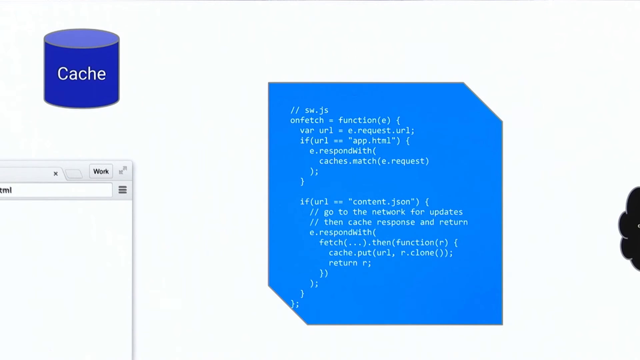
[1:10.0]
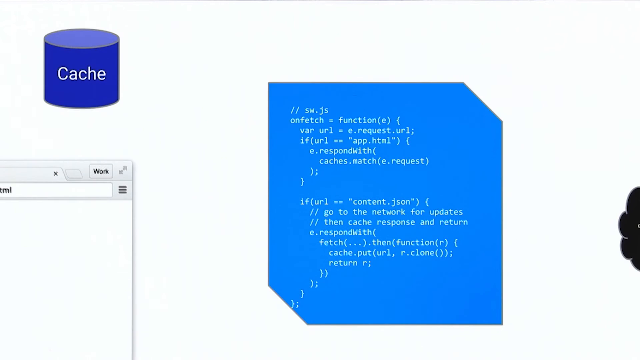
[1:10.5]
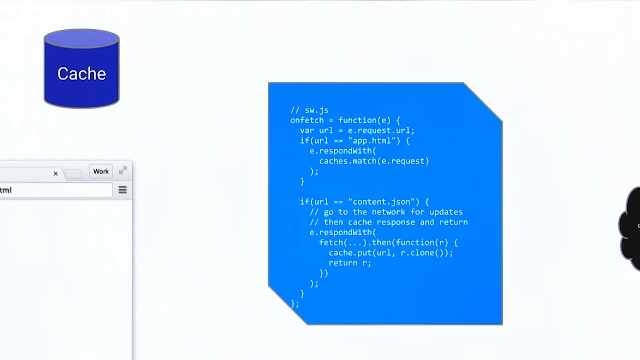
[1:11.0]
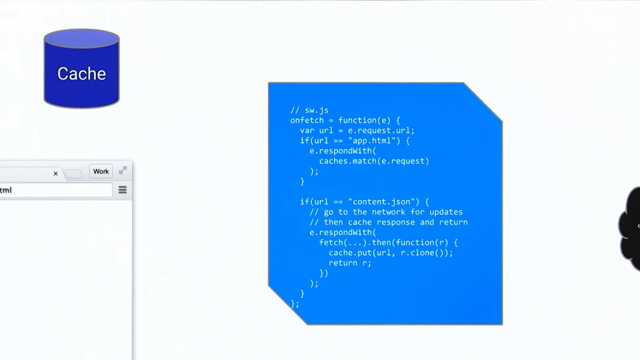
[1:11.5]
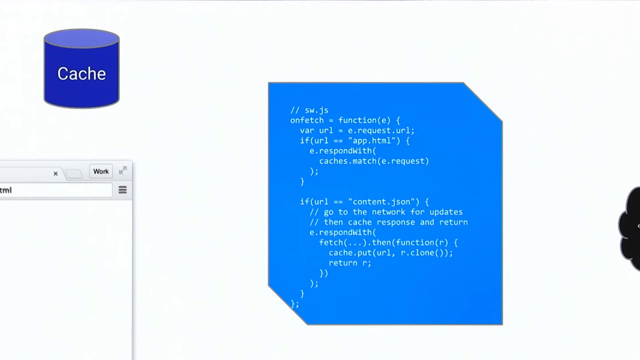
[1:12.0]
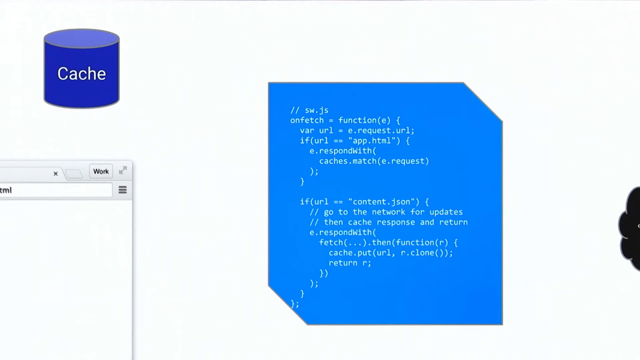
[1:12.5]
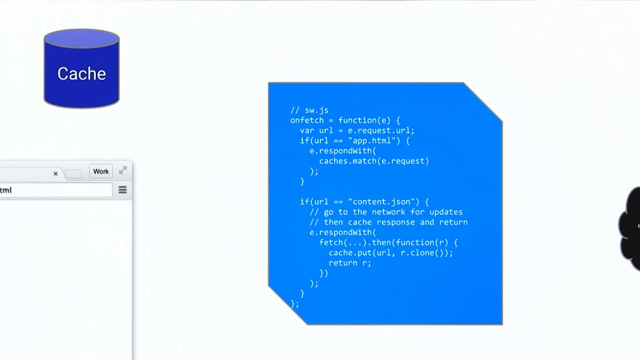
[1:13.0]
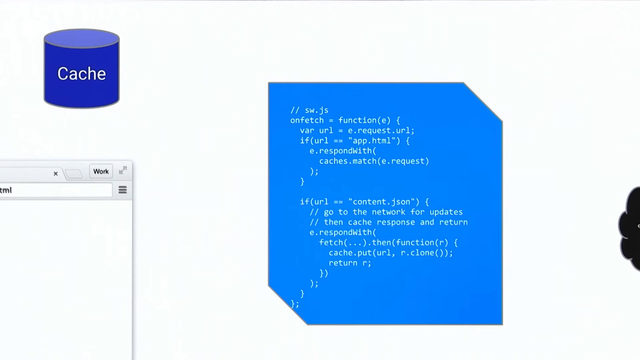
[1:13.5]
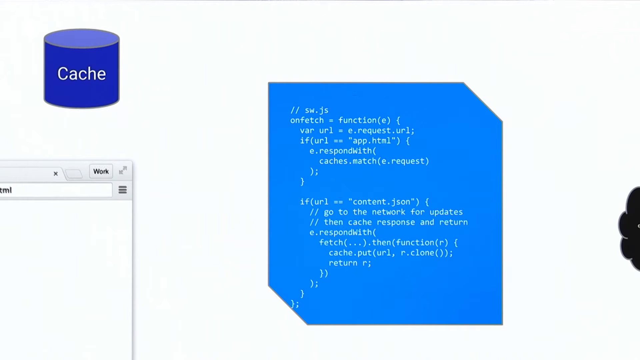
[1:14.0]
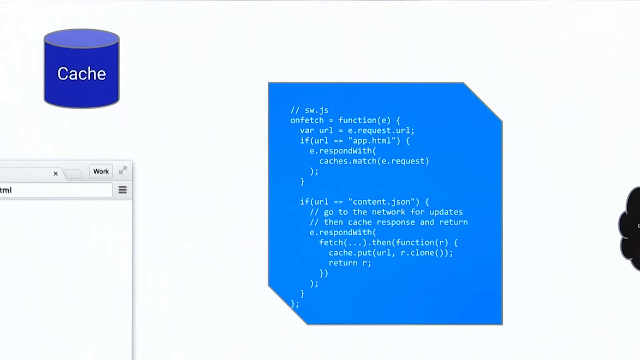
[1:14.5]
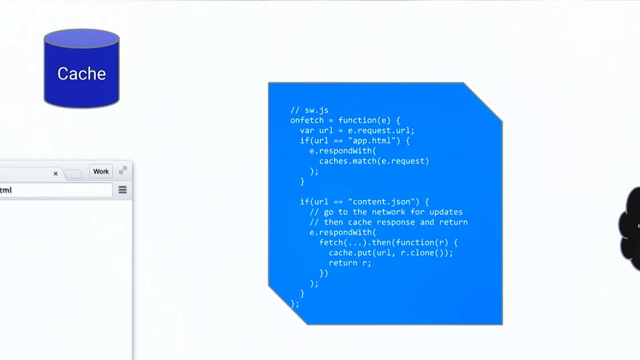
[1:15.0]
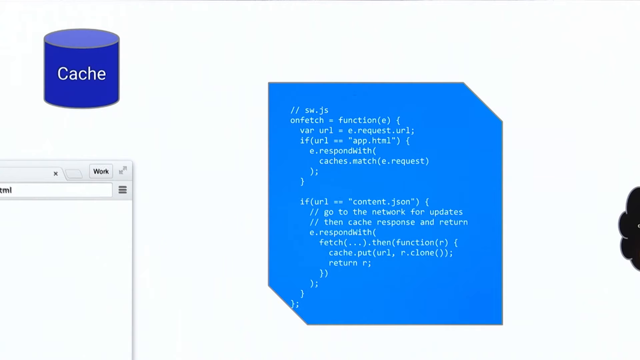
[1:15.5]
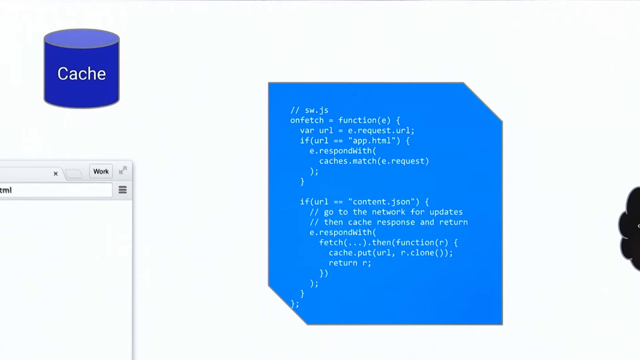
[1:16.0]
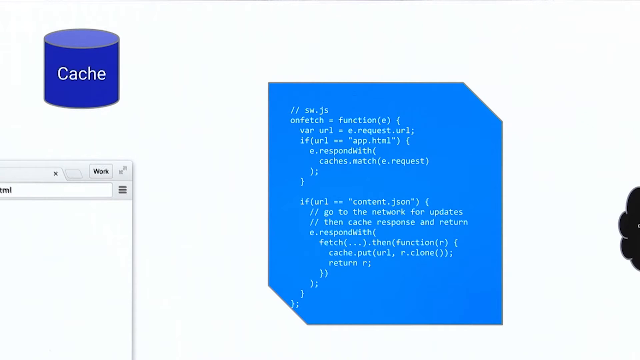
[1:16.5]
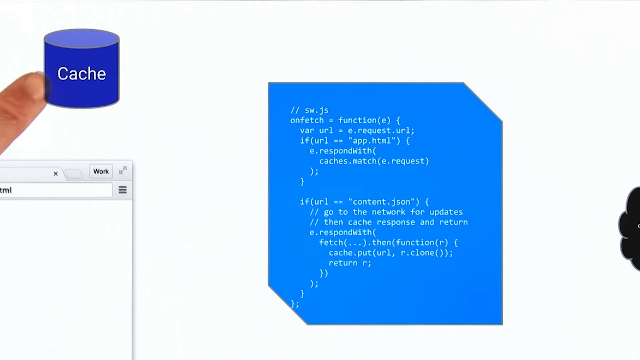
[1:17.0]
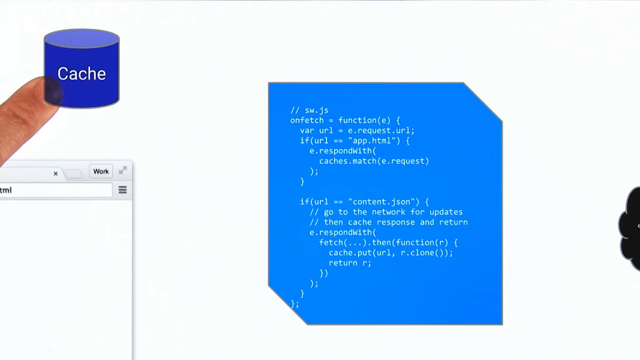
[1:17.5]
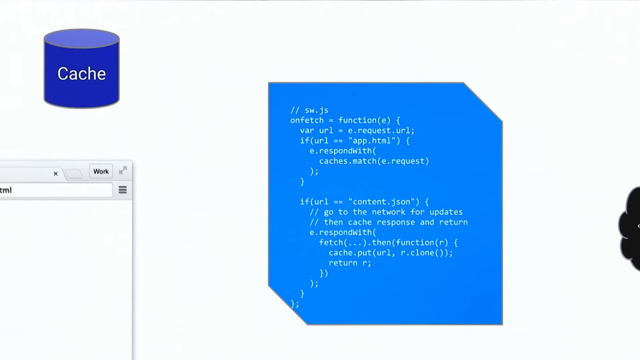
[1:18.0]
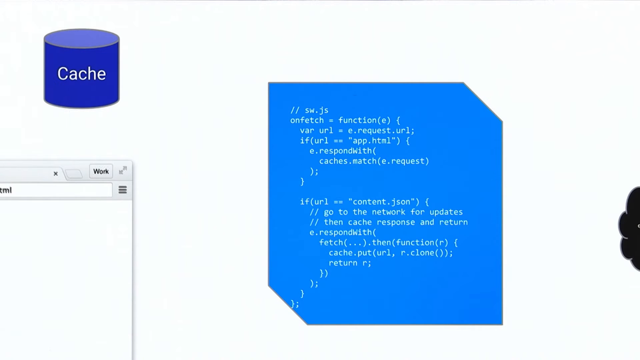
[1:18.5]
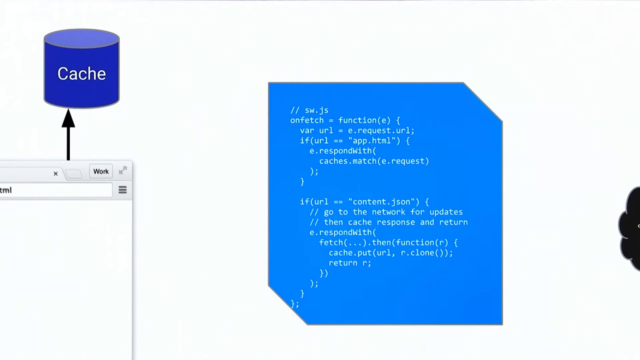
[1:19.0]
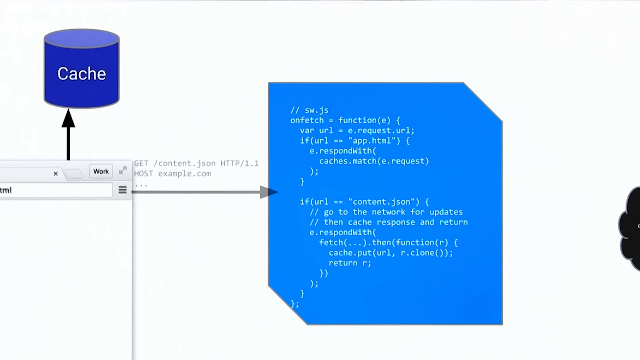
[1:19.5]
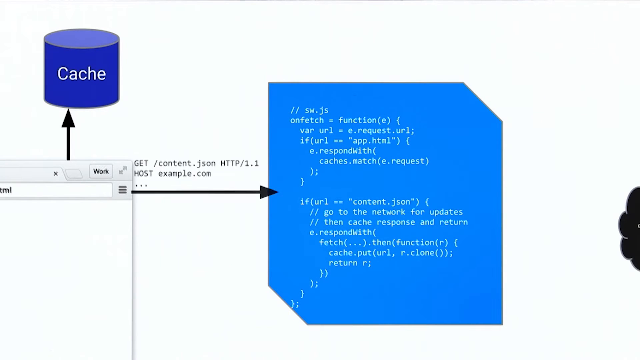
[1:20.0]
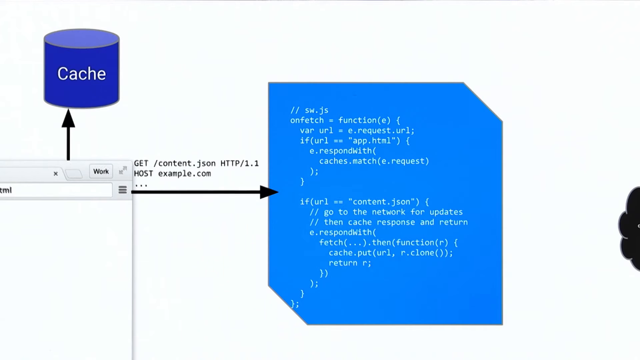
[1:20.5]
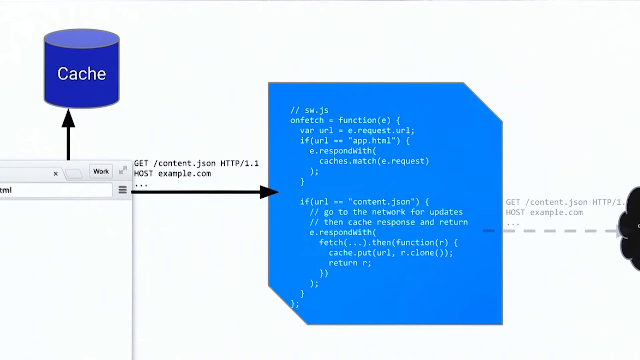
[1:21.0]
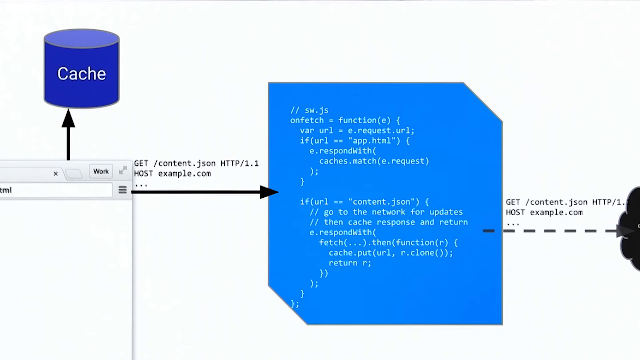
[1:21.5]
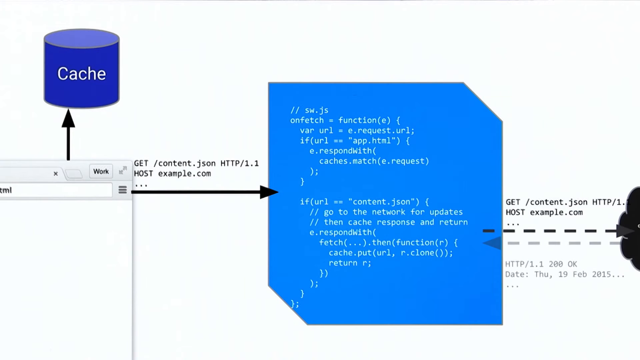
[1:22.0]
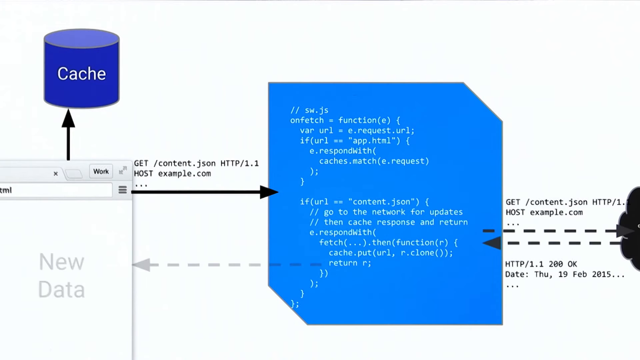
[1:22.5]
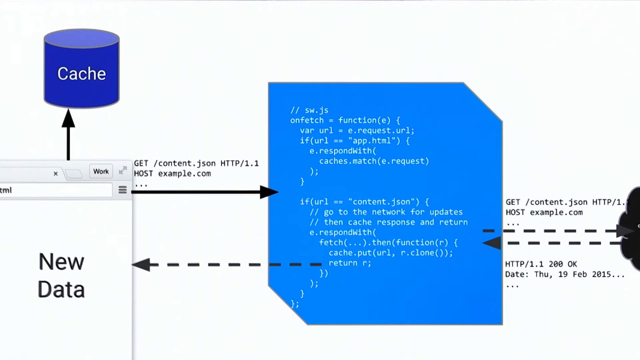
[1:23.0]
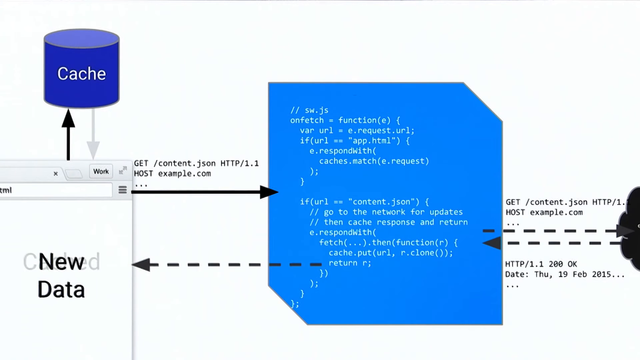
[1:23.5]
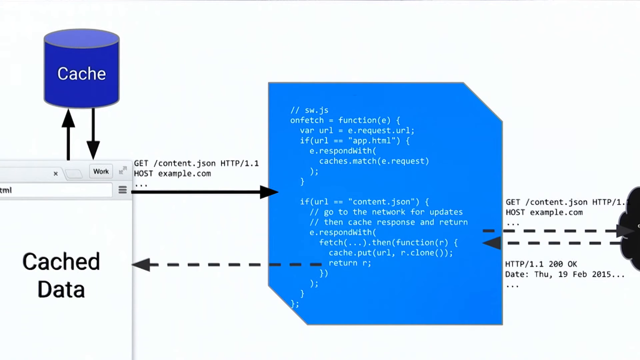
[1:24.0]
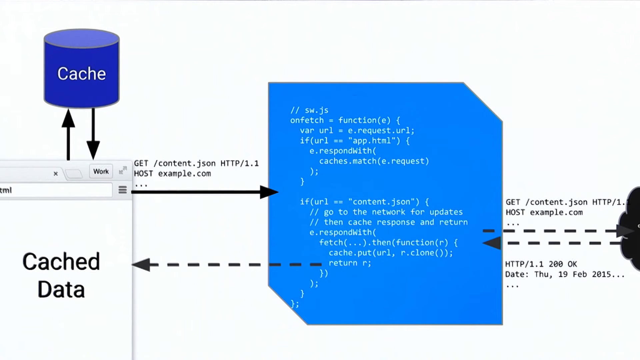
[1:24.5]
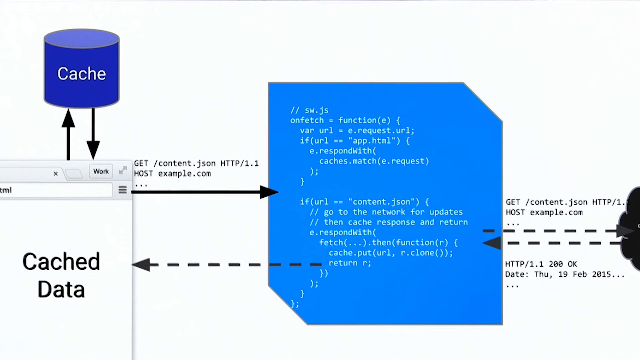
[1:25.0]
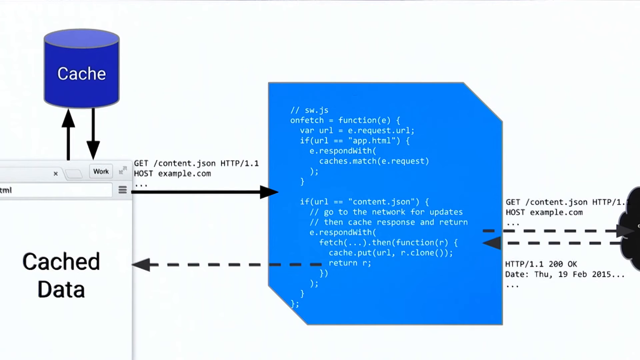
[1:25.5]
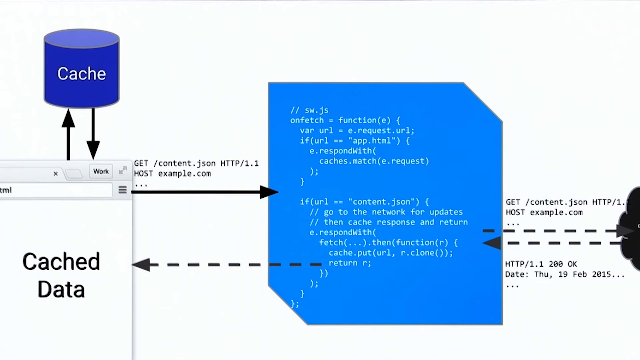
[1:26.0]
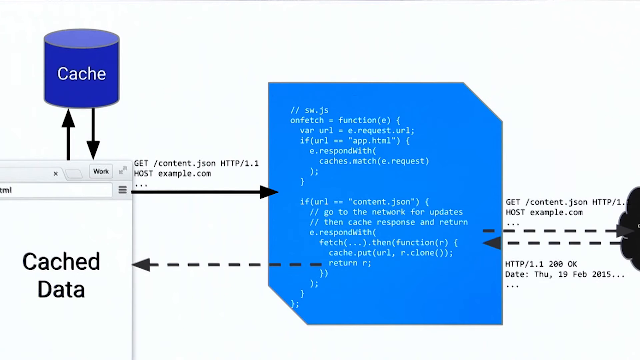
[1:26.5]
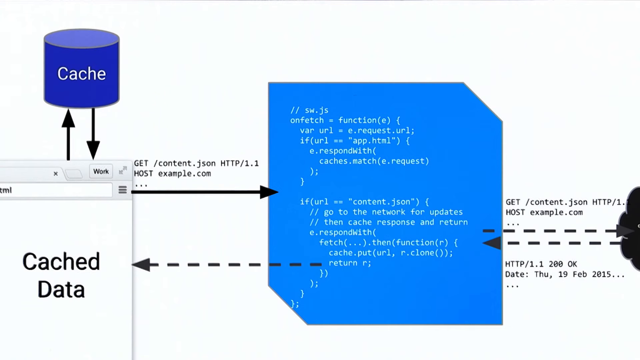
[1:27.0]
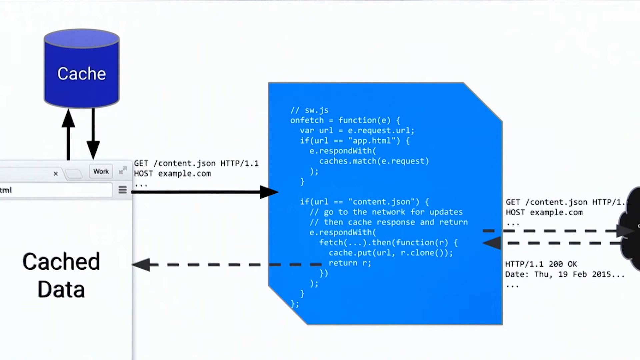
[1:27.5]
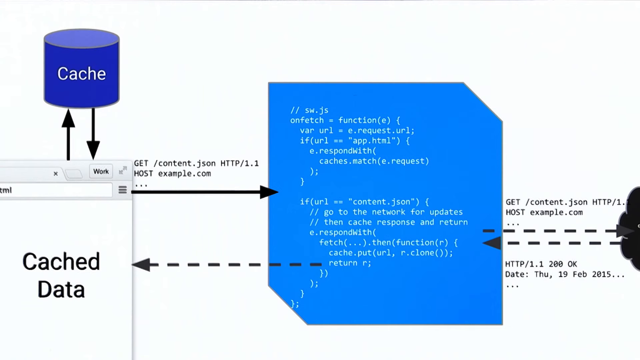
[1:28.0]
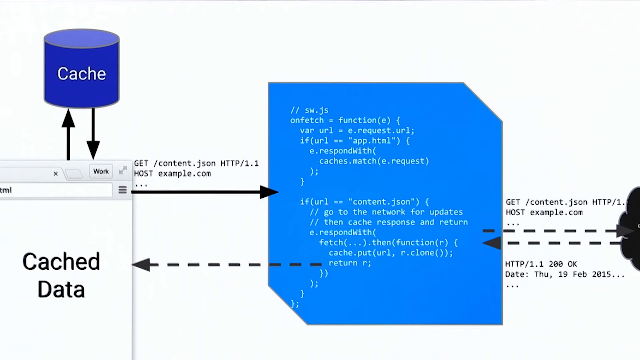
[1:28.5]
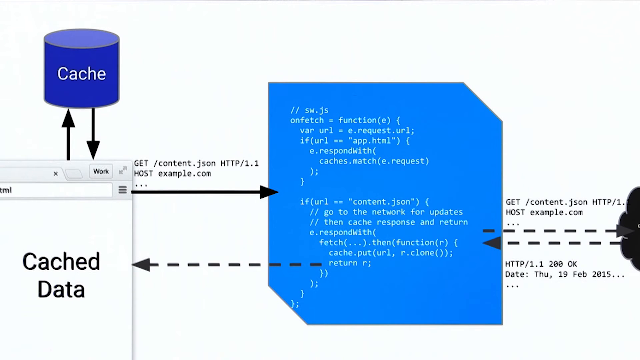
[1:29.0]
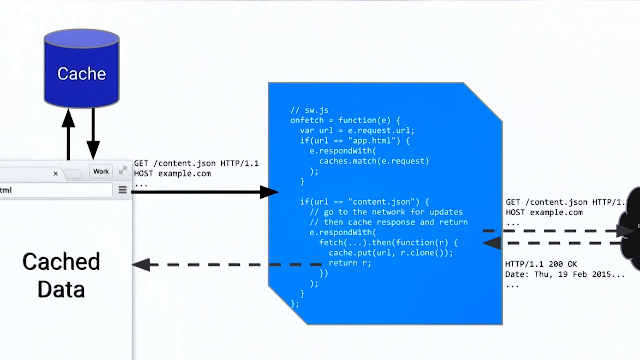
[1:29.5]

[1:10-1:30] A page shows computer programming written on a blue rectangle with two of its edges cut off, so it looks a little like a turned diamond. In the upper left-hand corner is a cylinder reading "cache". A finger points to the word cache, and a black arrow points up to the cache from a box reading "cached data" in the lower left-hand corner; arrows point up and down, showing movement back and forth between them. Horizontally, various arrows point back and forth between the three sections at the bottom: the cached data, the middle portion, and something black on the right side.